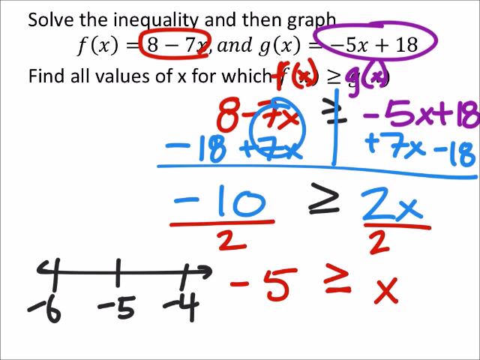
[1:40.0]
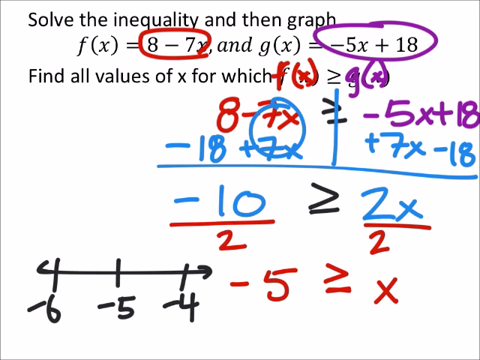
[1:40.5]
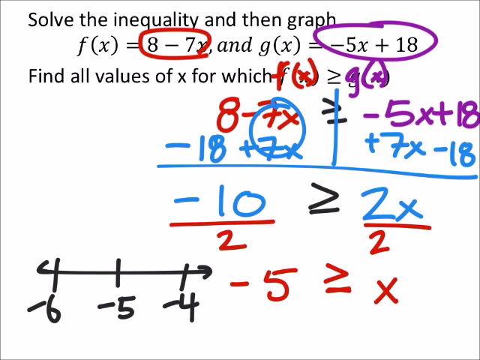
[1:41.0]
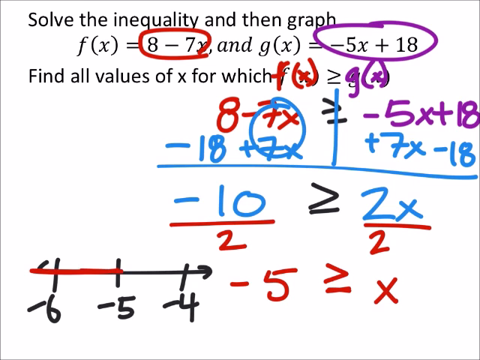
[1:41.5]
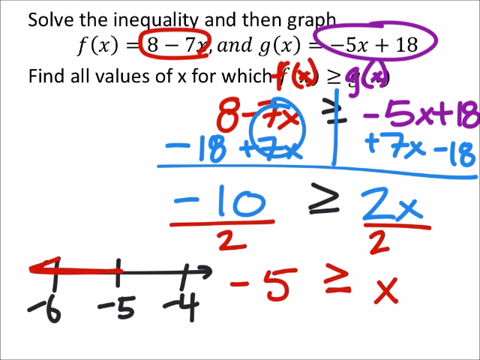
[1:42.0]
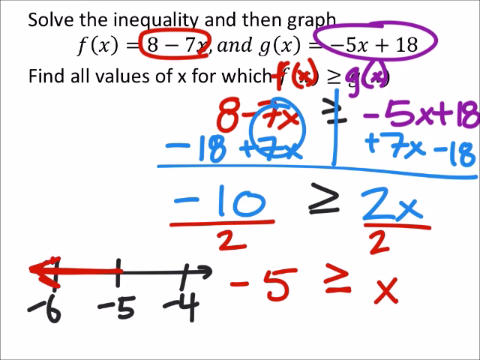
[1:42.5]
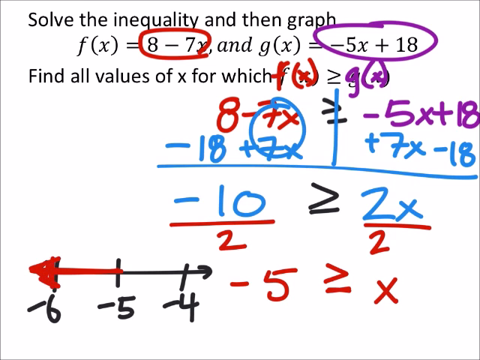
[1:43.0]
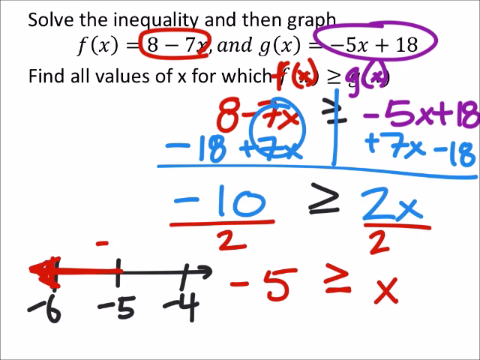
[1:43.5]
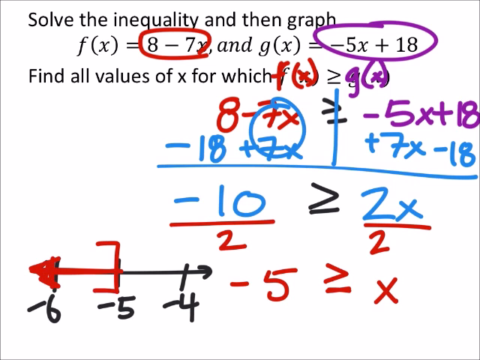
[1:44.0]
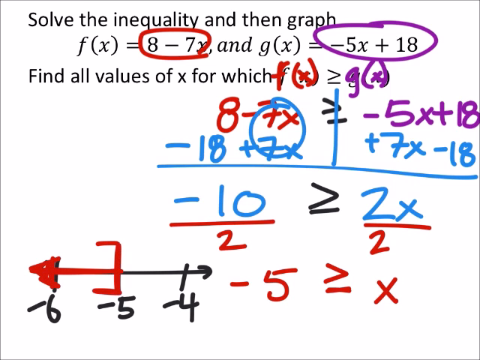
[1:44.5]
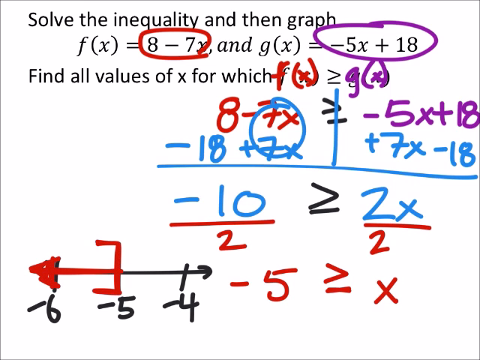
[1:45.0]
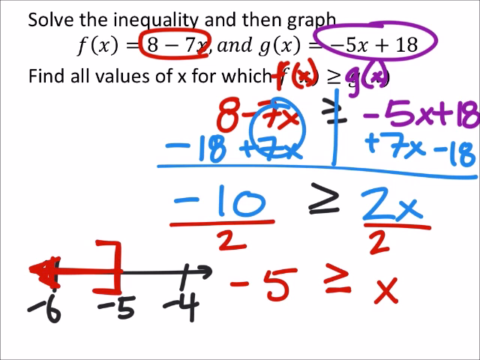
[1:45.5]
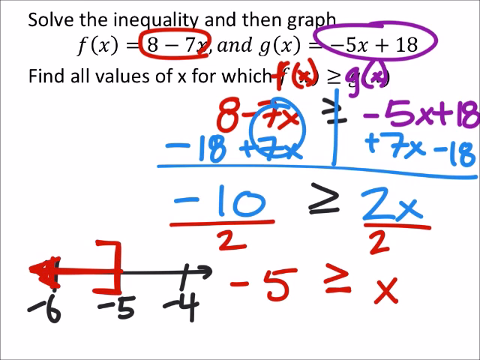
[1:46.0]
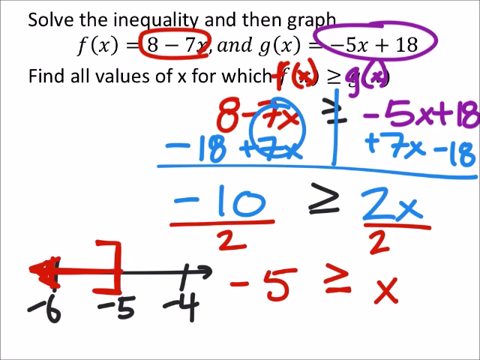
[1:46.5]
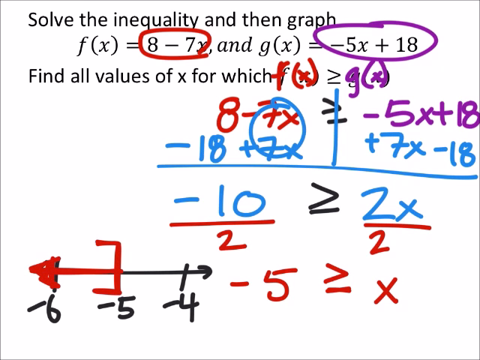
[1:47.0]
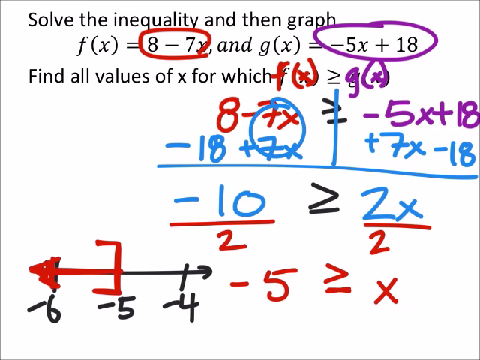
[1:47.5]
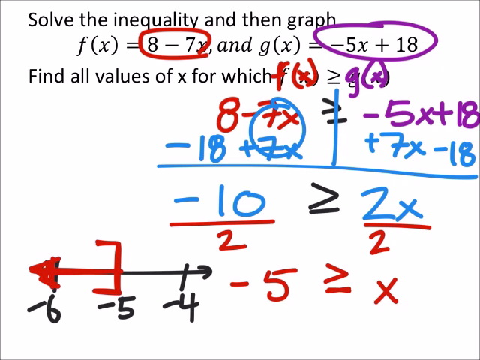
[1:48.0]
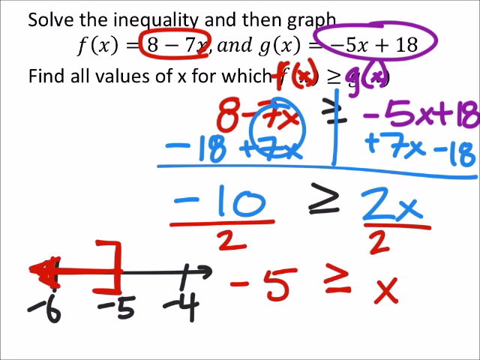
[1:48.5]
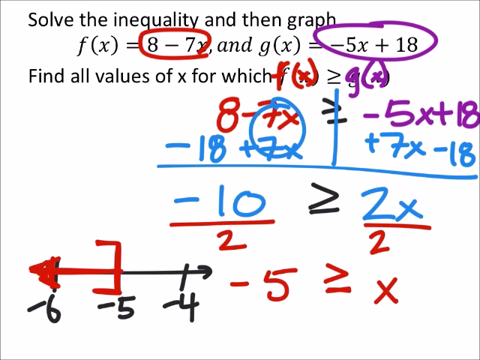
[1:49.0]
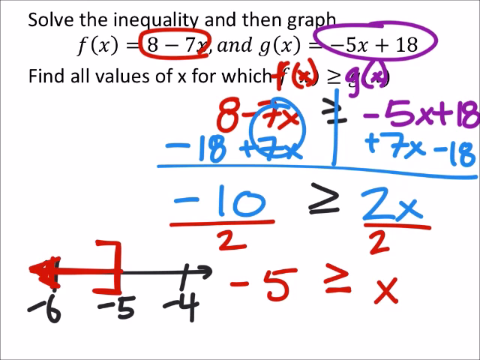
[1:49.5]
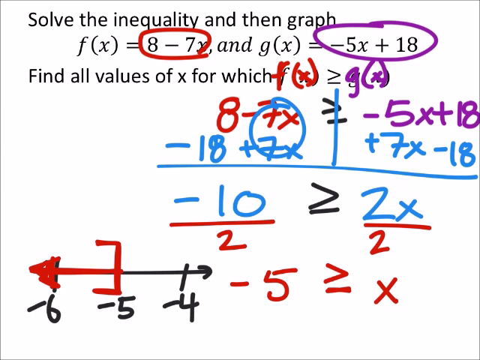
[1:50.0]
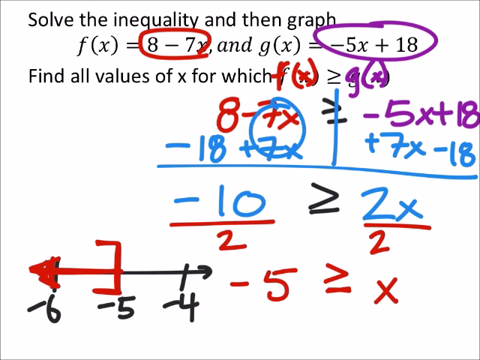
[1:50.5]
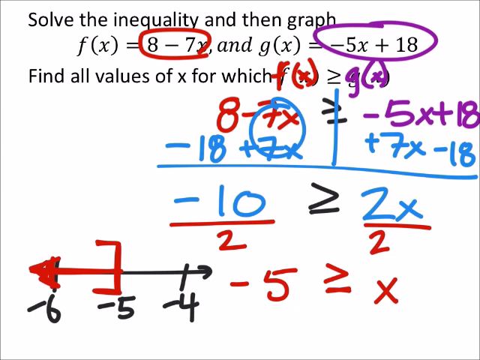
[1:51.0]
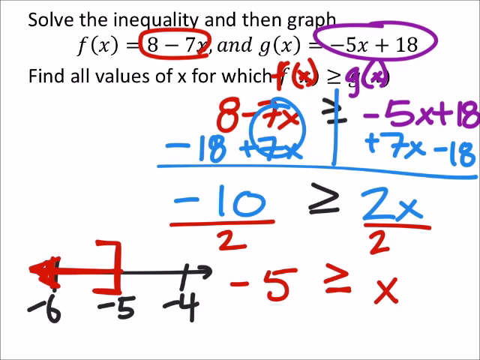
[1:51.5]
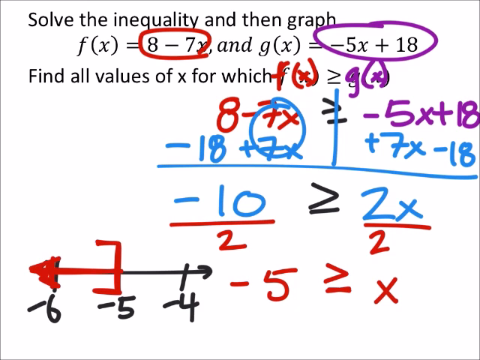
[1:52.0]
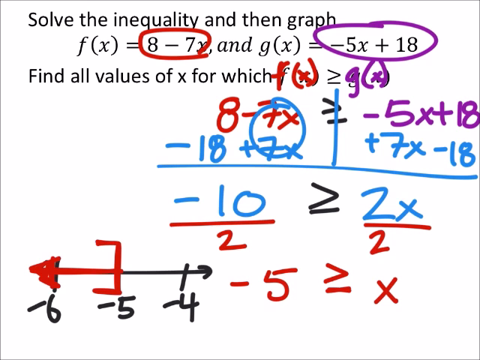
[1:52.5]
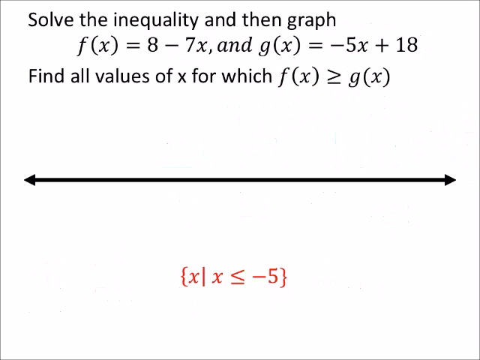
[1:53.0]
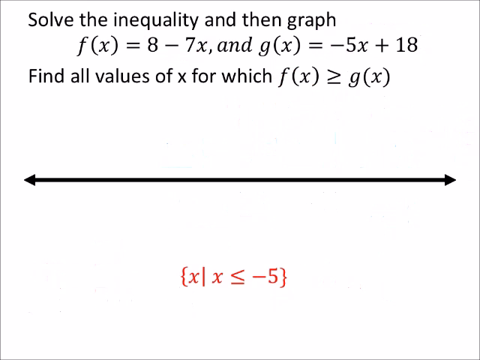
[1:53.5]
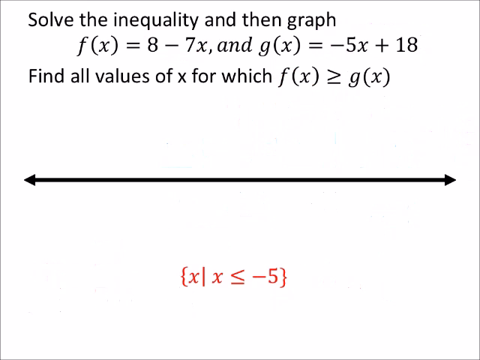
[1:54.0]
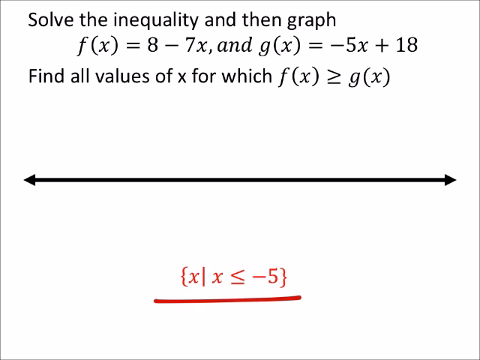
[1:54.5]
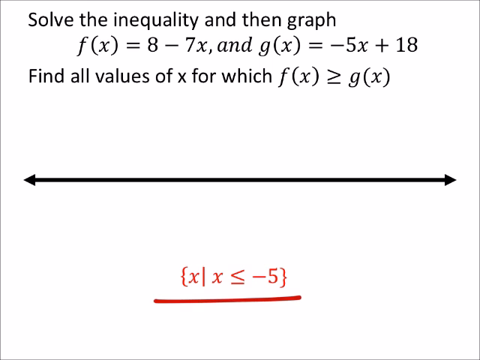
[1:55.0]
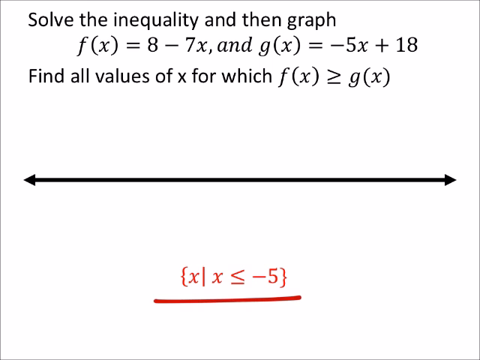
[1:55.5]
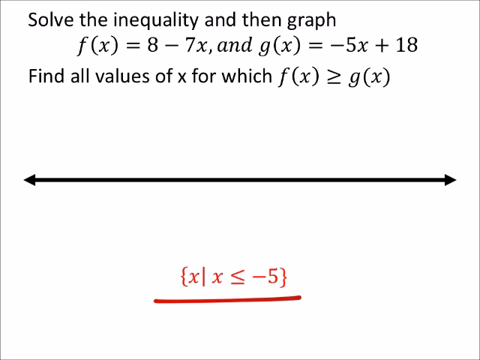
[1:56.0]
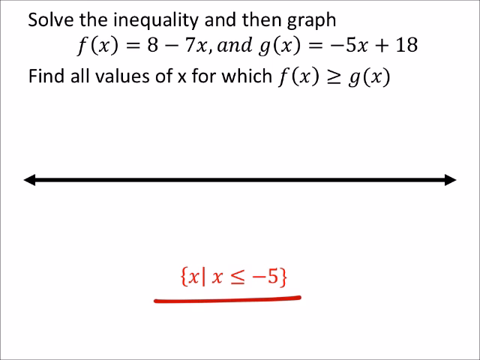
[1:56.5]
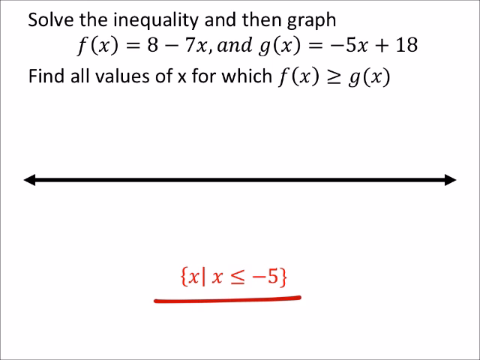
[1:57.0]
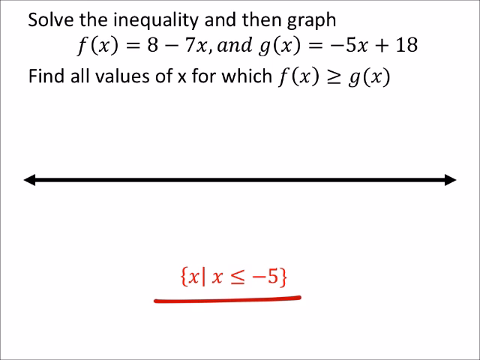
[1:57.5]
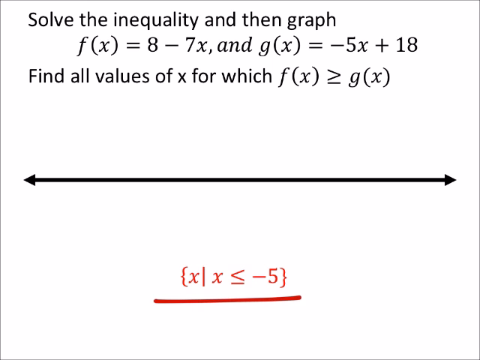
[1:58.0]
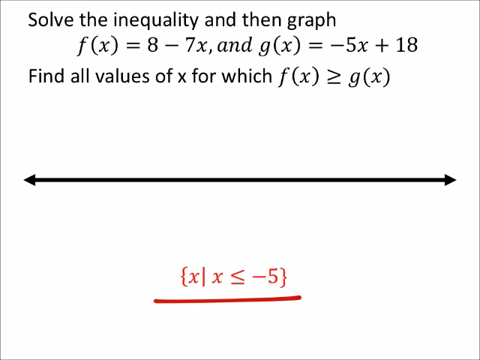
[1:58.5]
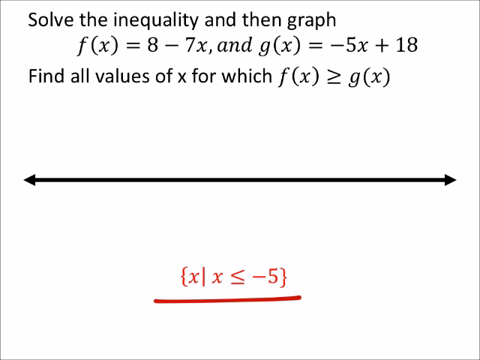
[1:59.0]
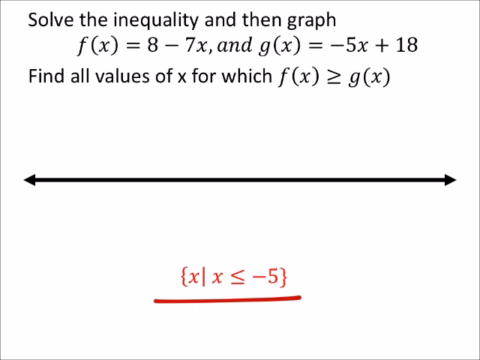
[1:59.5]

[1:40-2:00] A red outline is drawn over the left side of the bottom left line, covering only the left part of the line and the left arrowhead. A red square bracket open toward the left is then drawn at the center of the black line, where the red line does not pass, and it is gone over a few times to make a thick line. The screen then switches to another screen showing the original question and equation with all the markings removed. At the very bottom of the screen, below the arrow that was originally in the center of the screen, is another equation in red text. A red underline is drawn underneath this text.